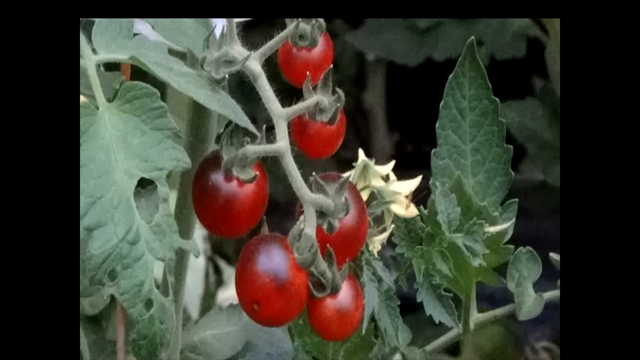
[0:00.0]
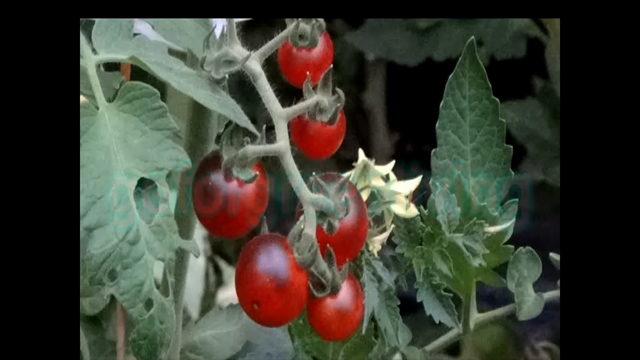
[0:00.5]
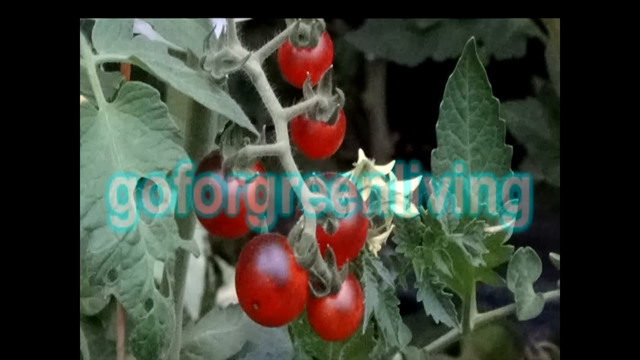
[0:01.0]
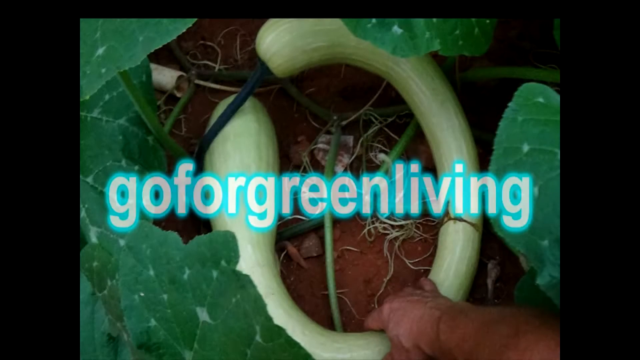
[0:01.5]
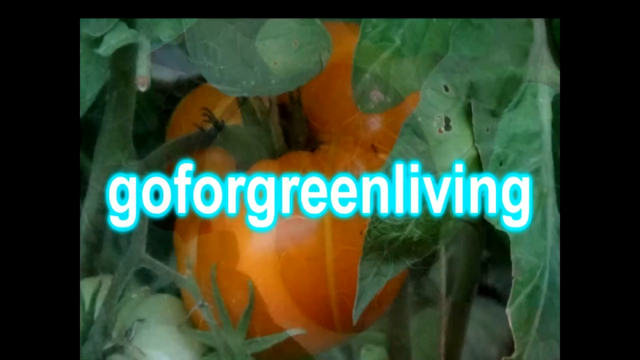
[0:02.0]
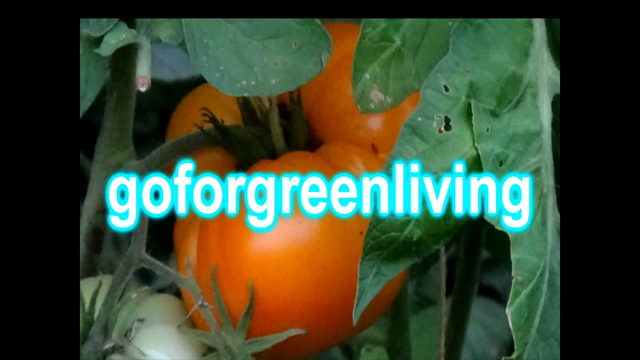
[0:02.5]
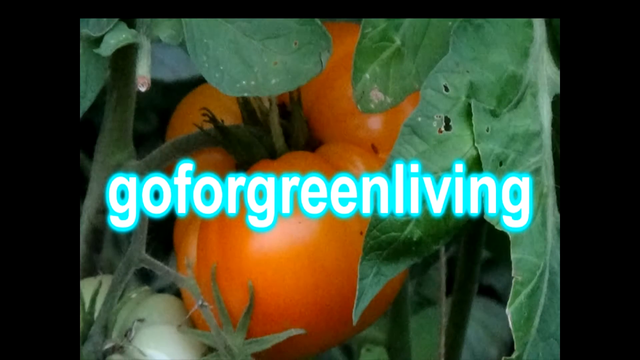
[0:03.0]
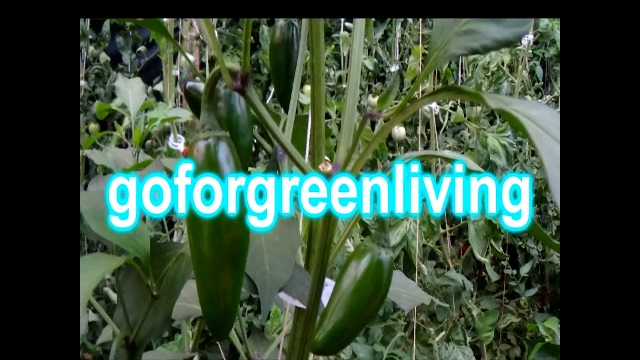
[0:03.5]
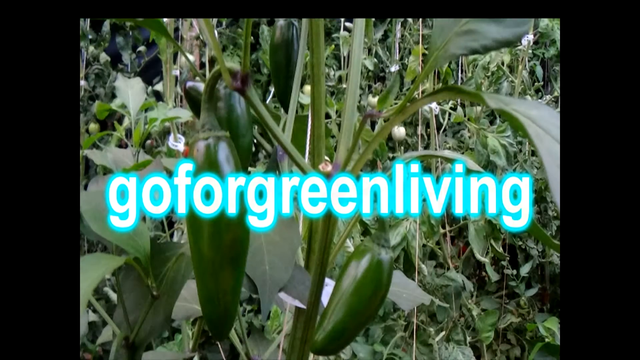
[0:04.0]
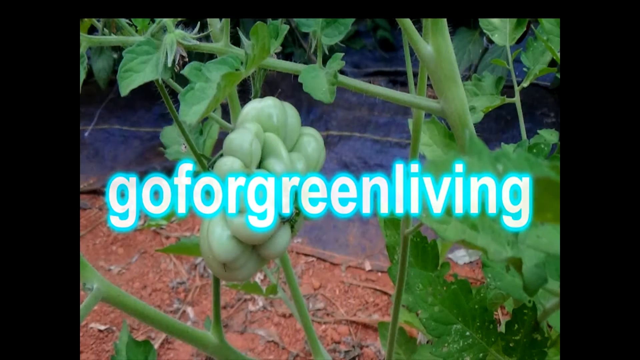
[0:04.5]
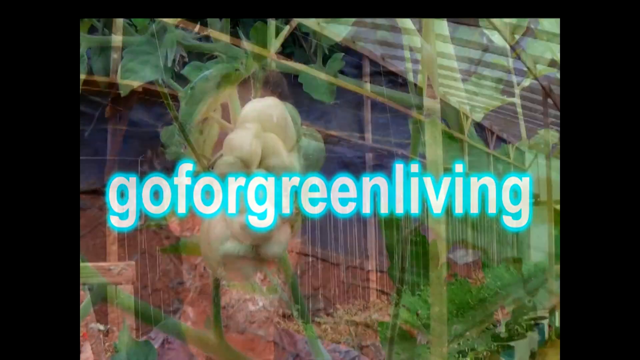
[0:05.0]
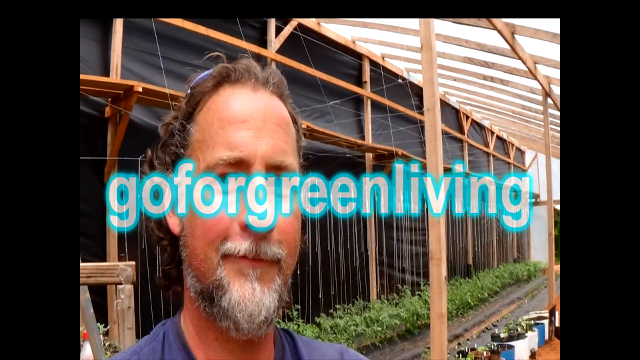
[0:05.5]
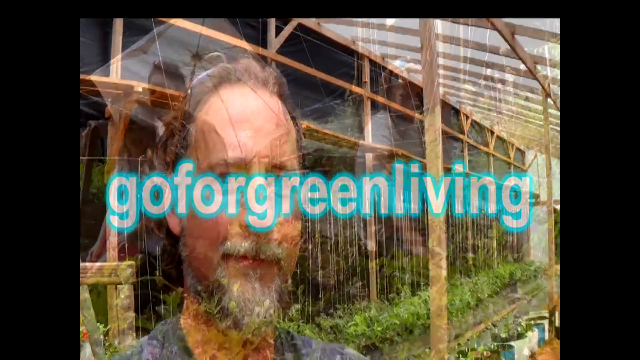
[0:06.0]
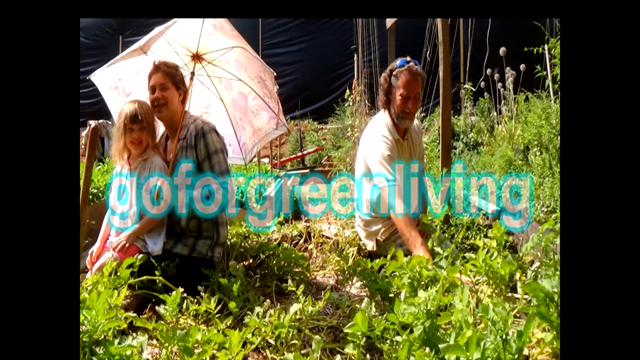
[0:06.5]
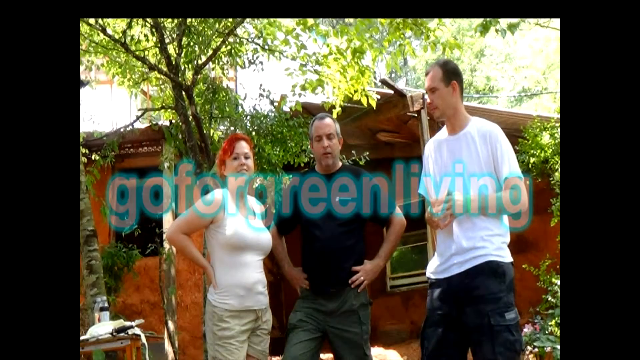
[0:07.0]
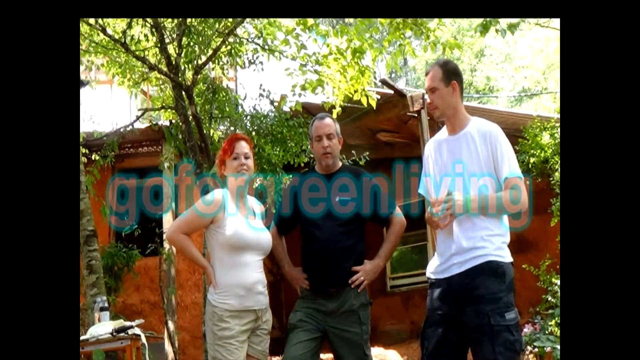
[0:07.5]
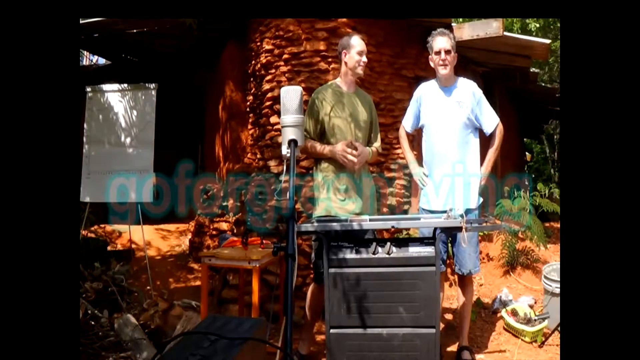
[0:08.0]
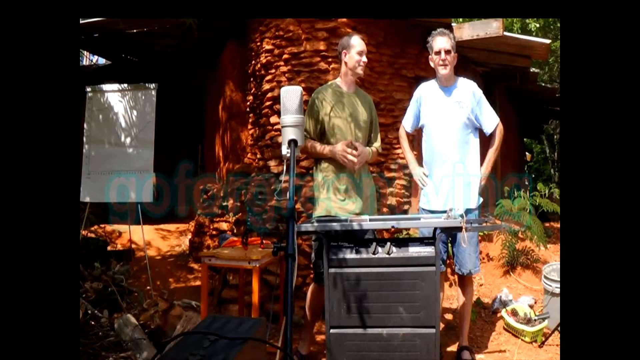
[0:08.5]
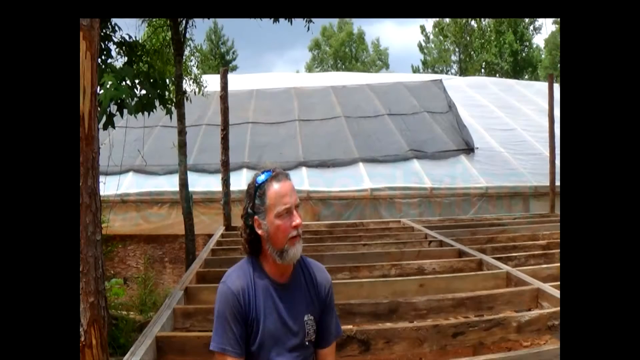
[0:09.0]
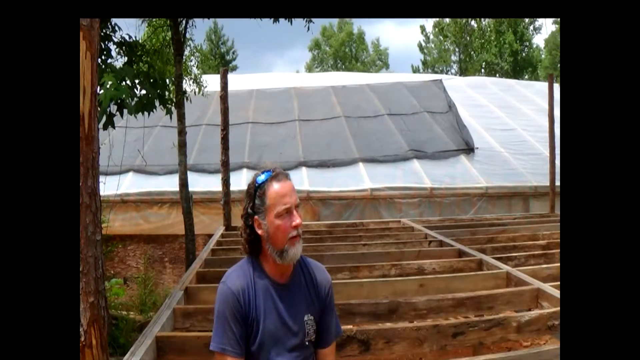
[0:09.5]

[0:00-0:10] An image shows what looks like cherries on a plant, with six cherries that look ripe and green leaves. Text appears on screen reading "go for green living" over a blue background. The images in the background change, showing more vegetation, followed by more shots of what looks like a farm and then white individuals. More photos of these individuals follow, leading into a selection of a few of the main photos with mud huts in the background.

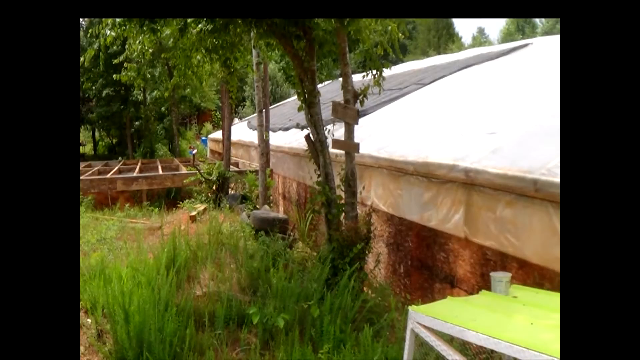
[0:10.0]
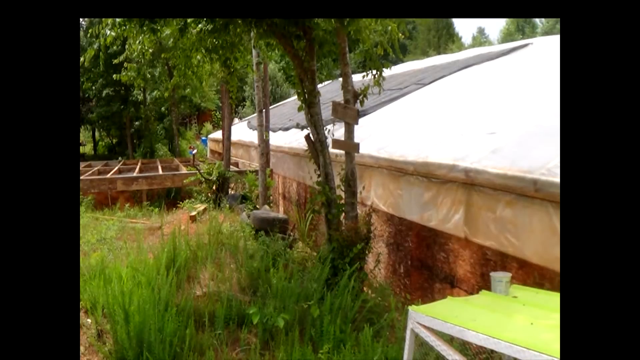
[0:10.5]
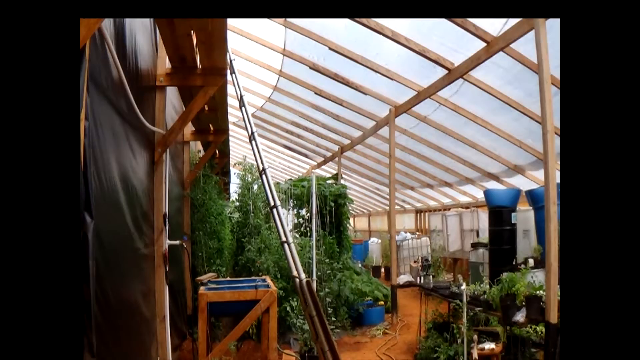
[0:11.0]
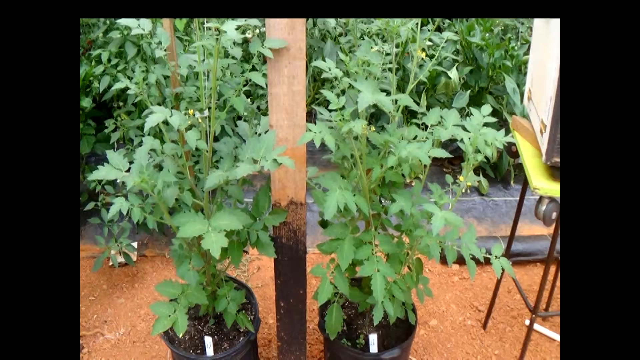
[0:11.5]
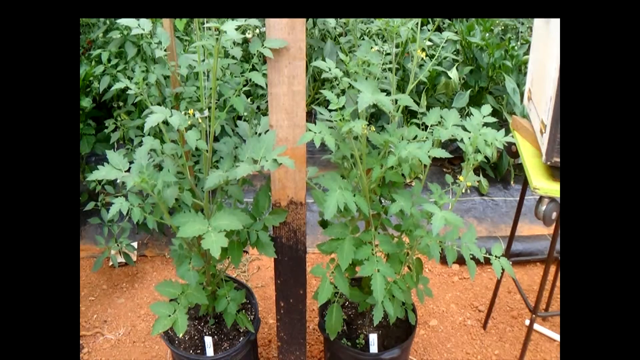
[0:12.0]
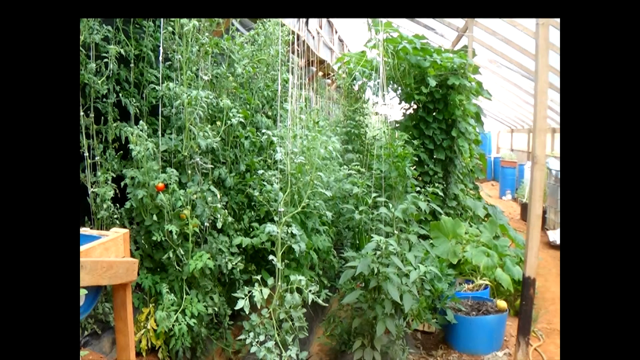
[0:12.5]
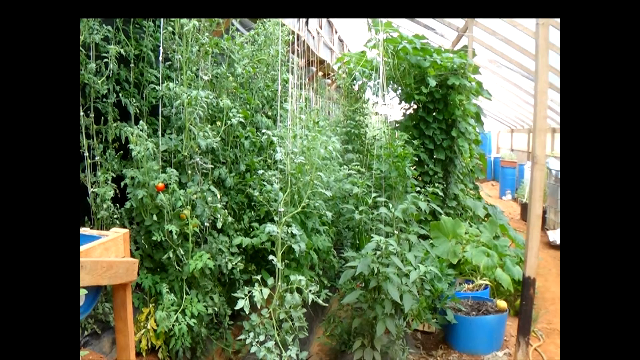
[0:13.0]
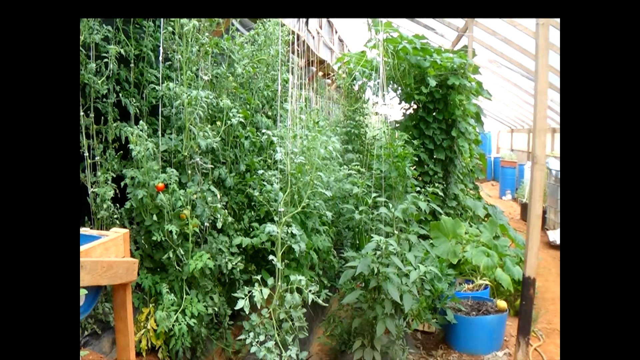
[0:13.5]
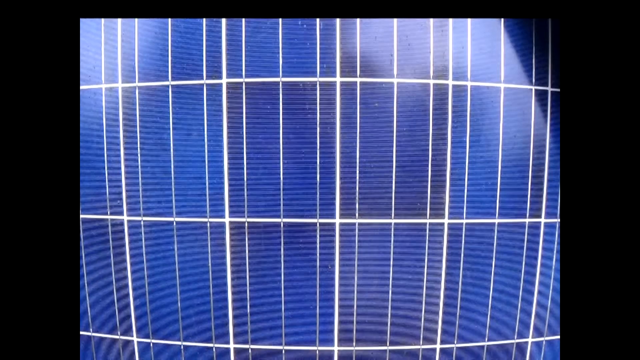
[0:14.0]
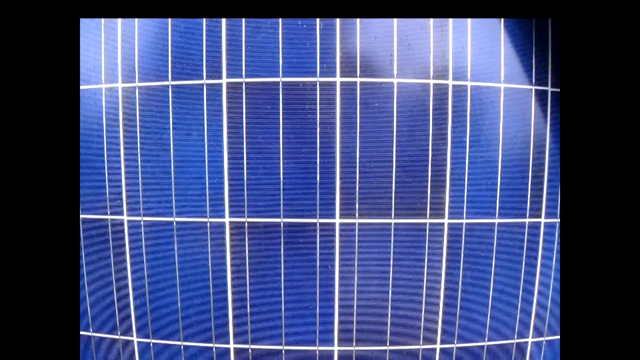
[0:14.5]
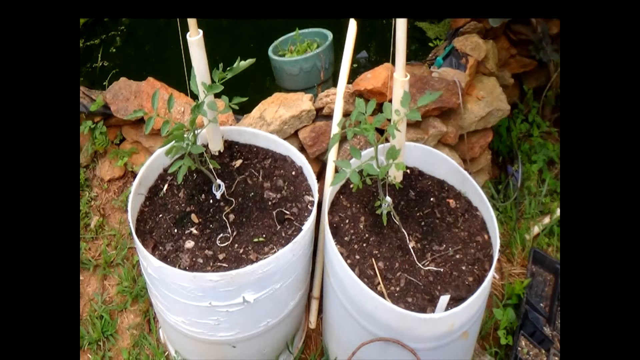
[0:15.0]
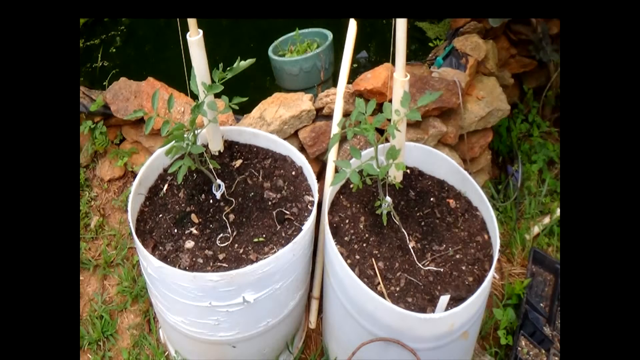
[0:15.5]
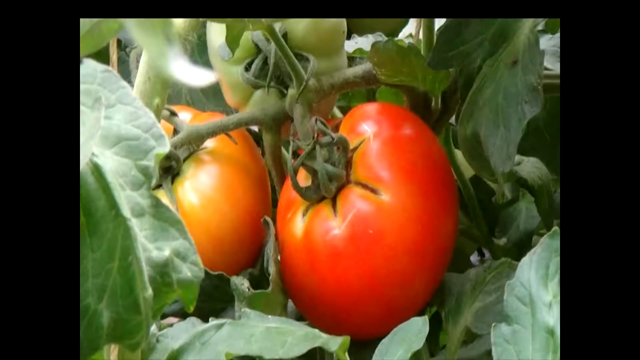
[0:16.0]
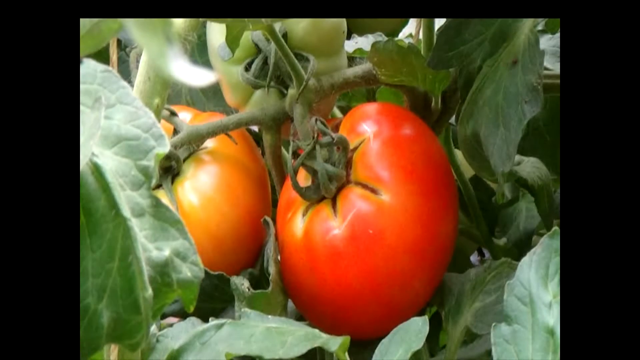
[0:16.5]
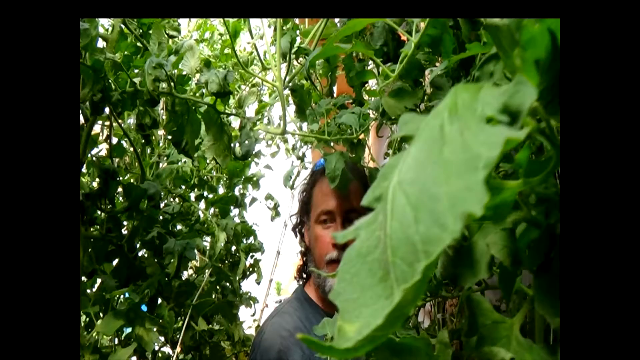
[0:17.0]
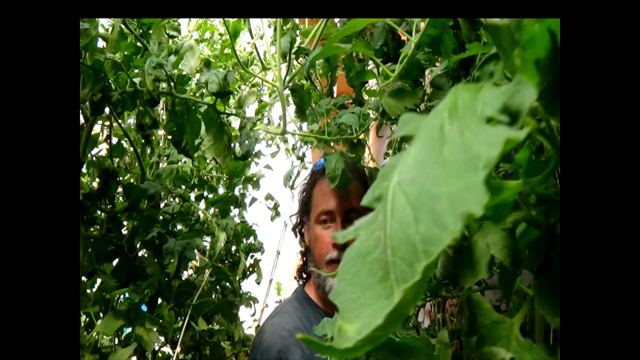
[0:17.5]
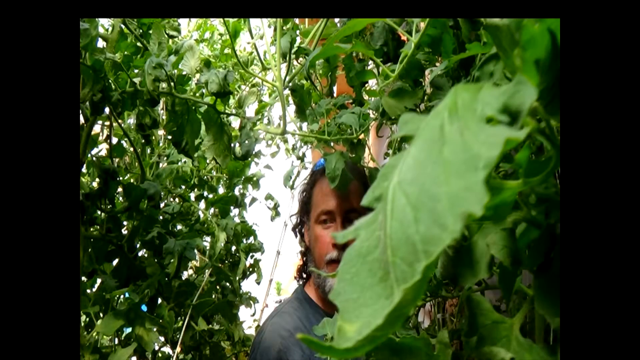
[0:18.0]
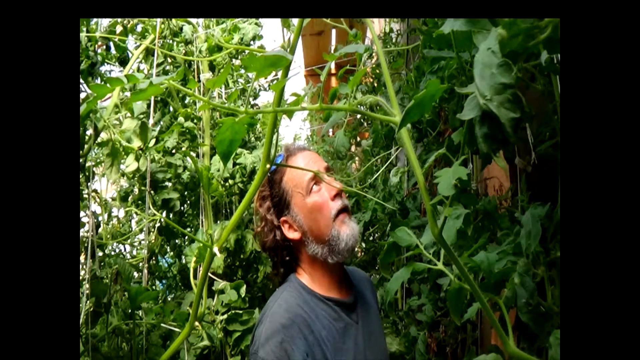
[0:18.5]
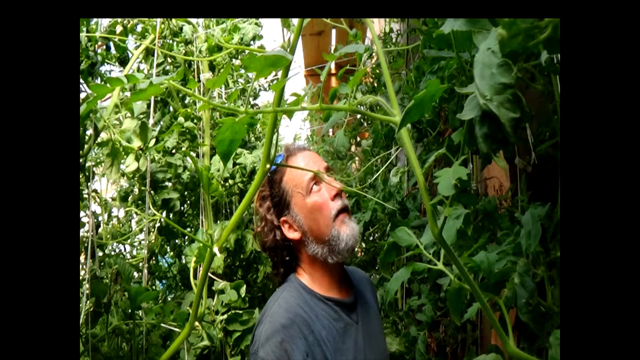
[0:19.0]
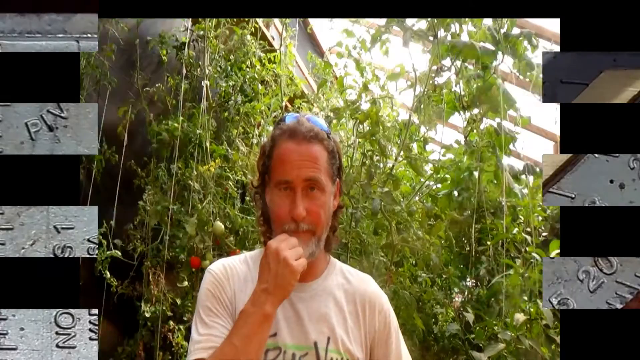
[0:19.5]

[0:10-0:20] Images of what looks like a farm continue, showing what looks like a makeshift warehouse or farmhouse surrounded by overgrown grass; the area looks poorly kept. Six trees stand in a line, disappearing into what looks like a forest of tall trees in the background. More images follow, showing the inside of the shed or farmhouse, more trees and plants, and what looks like an overgrown plantation. Images of sacks filled with manure appear. A man with a full white beard, brown hair, sunglasses on his head and a blue shirt looks up at what looks like the vine or cherry plantation seen earlier. The image fades into another image of the man.